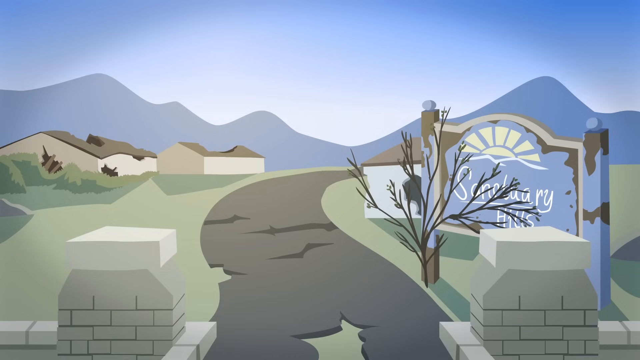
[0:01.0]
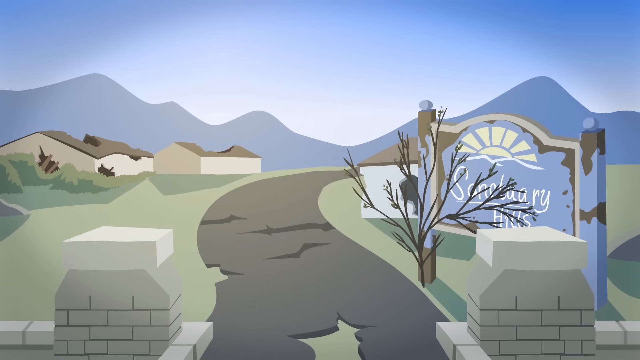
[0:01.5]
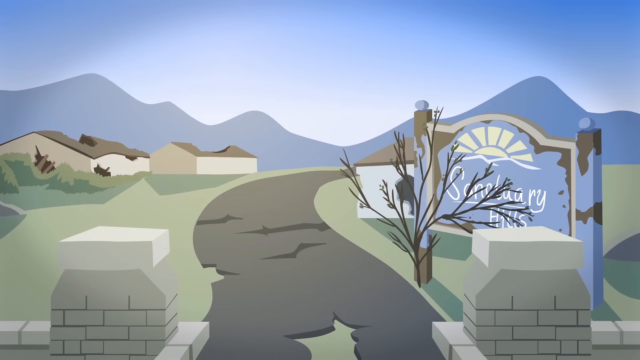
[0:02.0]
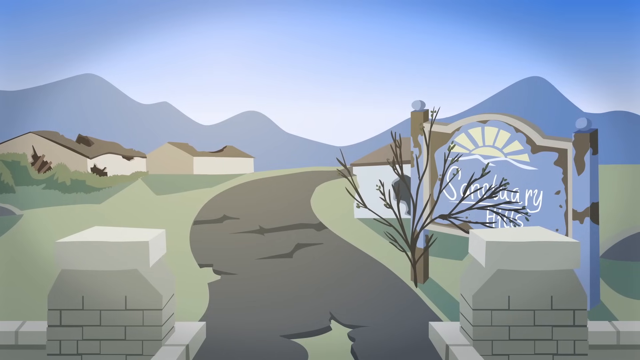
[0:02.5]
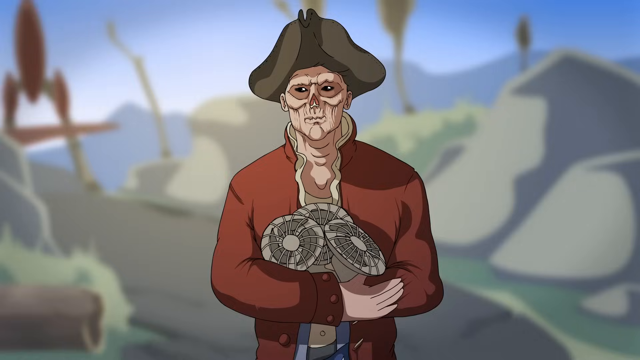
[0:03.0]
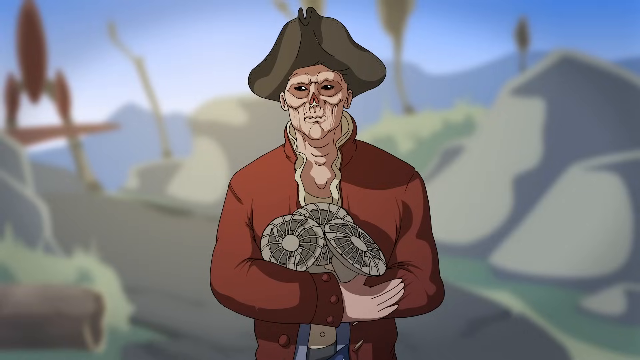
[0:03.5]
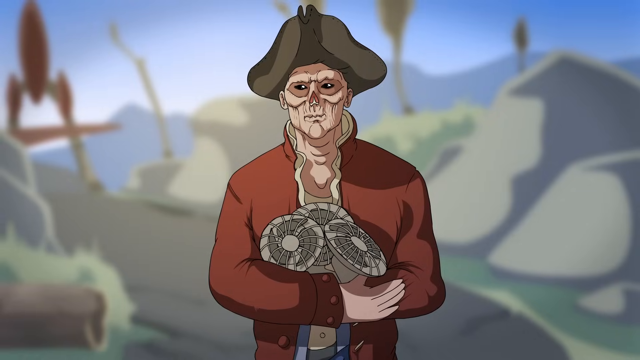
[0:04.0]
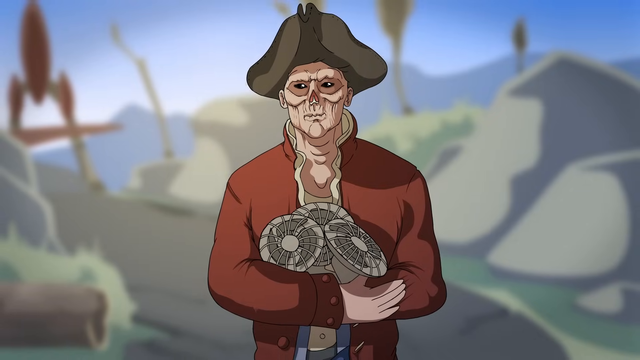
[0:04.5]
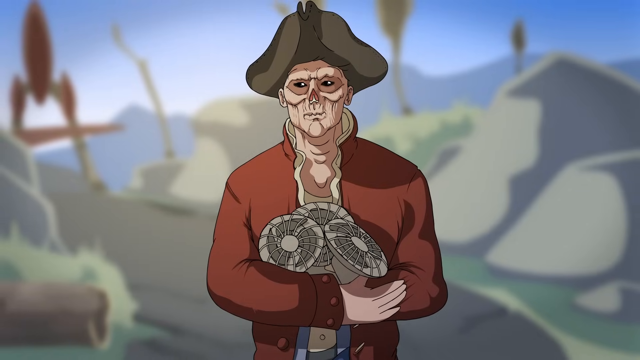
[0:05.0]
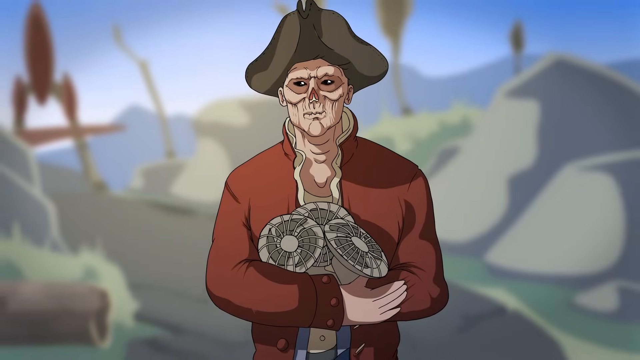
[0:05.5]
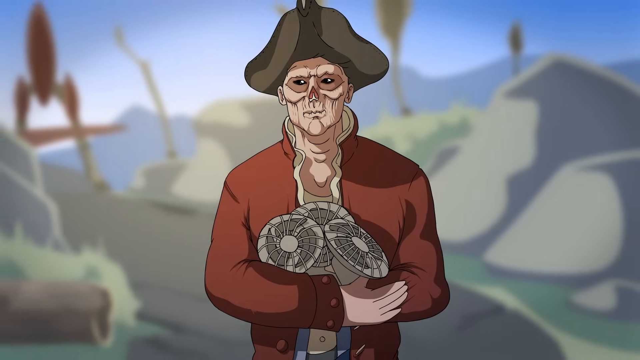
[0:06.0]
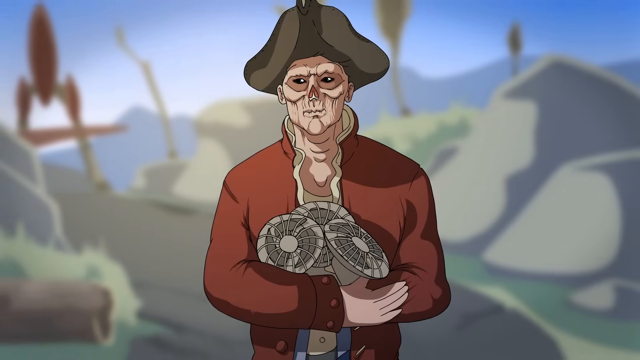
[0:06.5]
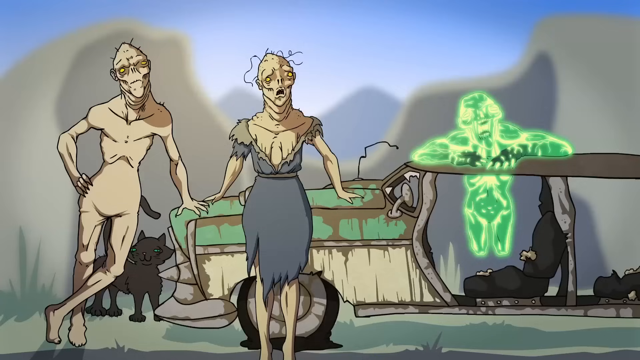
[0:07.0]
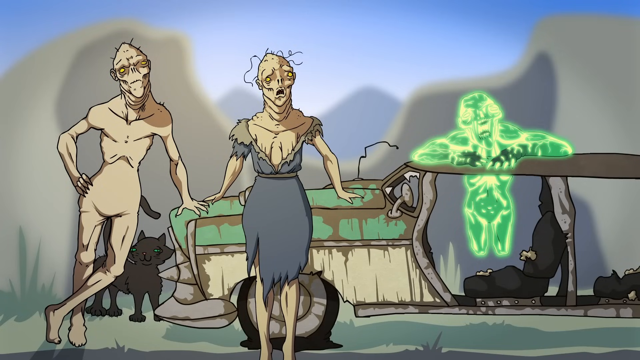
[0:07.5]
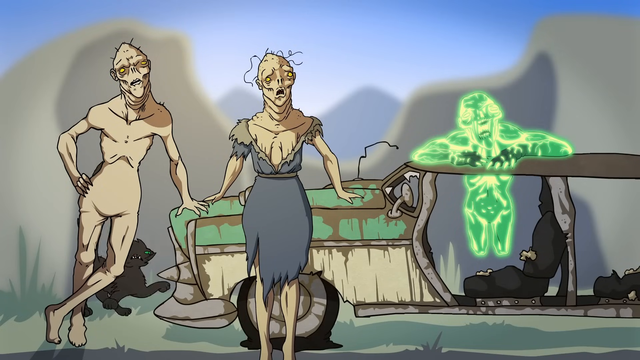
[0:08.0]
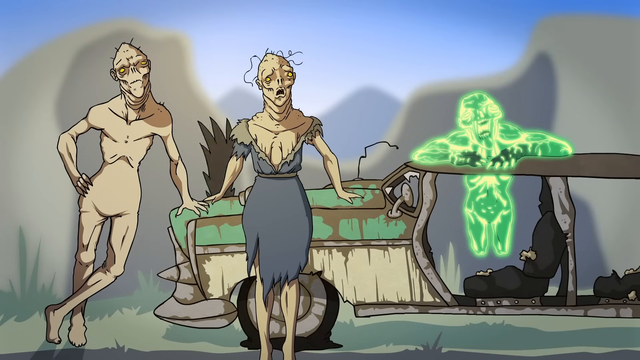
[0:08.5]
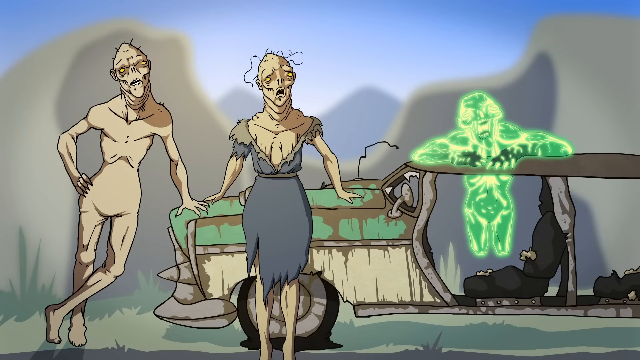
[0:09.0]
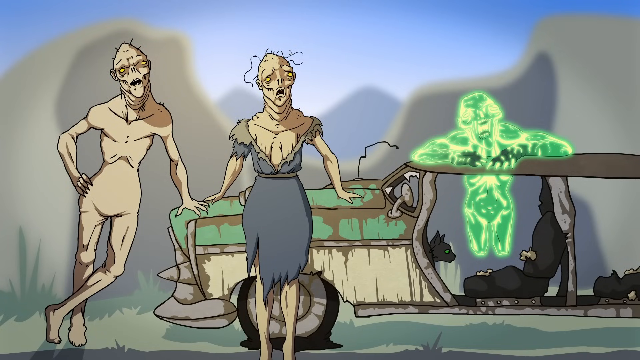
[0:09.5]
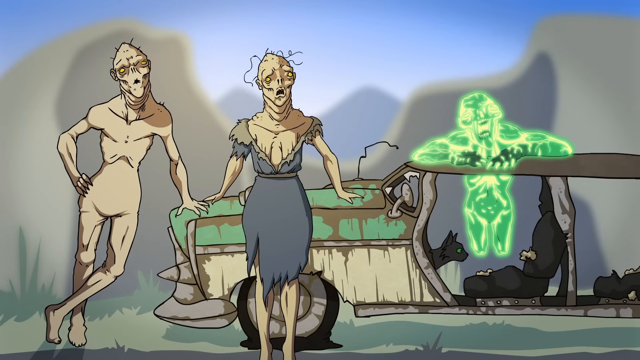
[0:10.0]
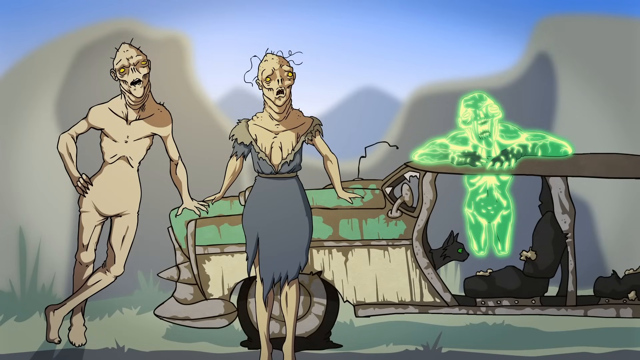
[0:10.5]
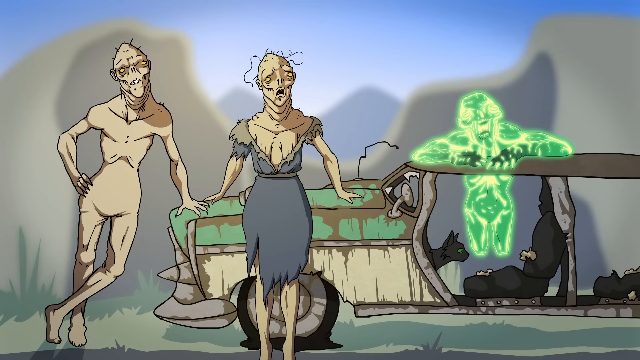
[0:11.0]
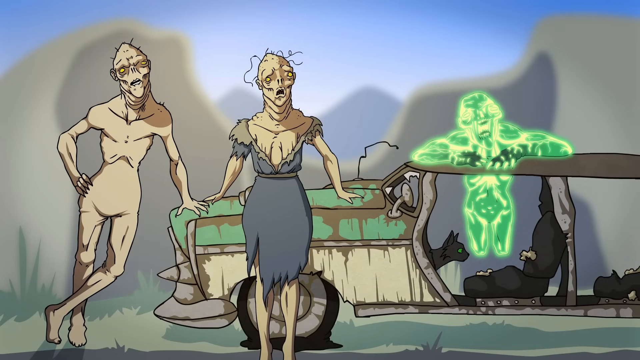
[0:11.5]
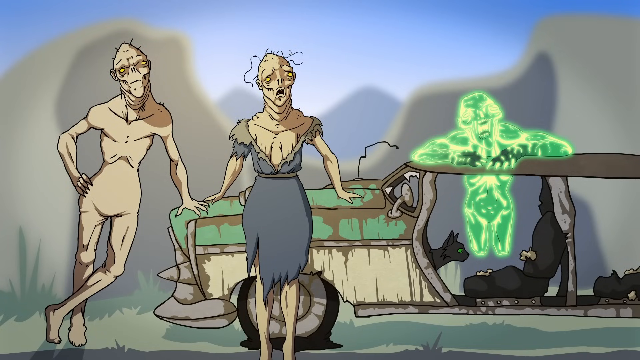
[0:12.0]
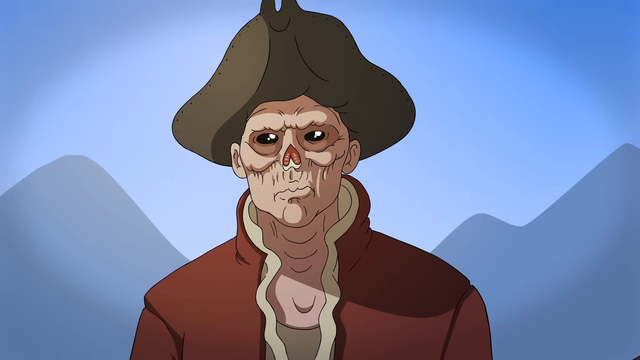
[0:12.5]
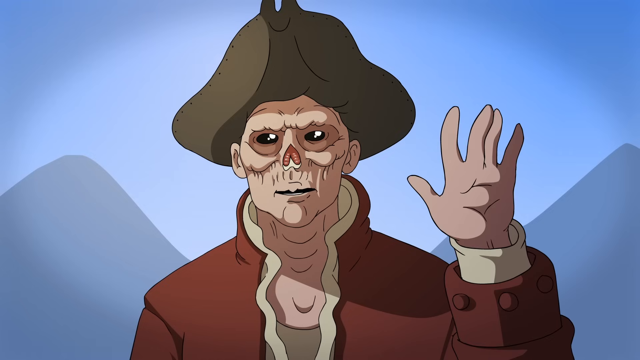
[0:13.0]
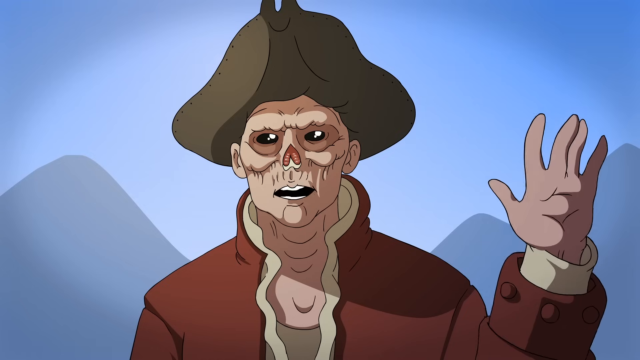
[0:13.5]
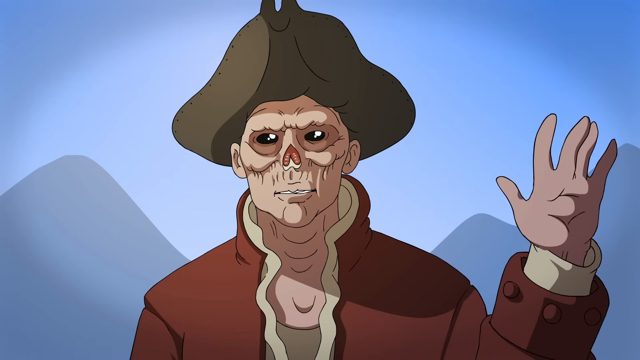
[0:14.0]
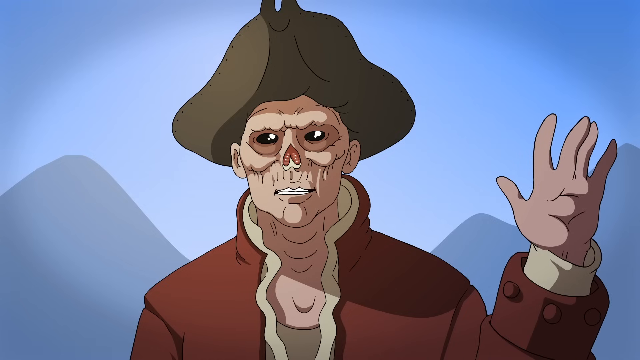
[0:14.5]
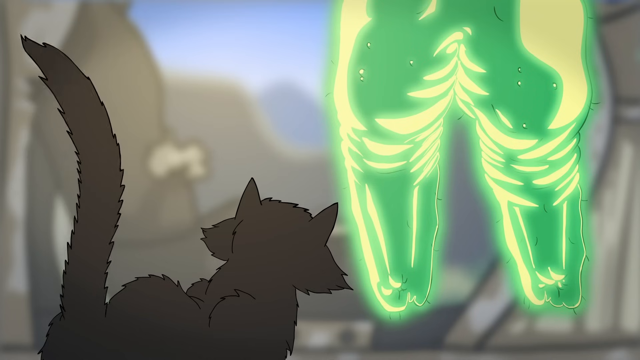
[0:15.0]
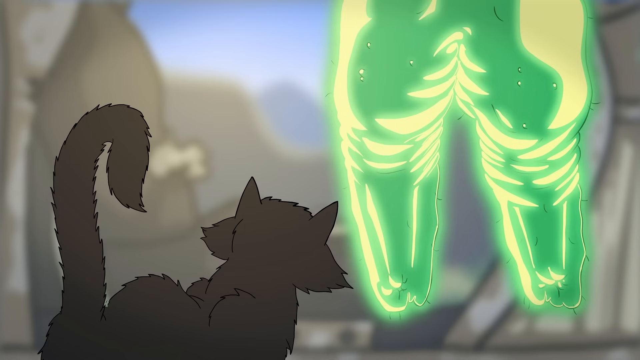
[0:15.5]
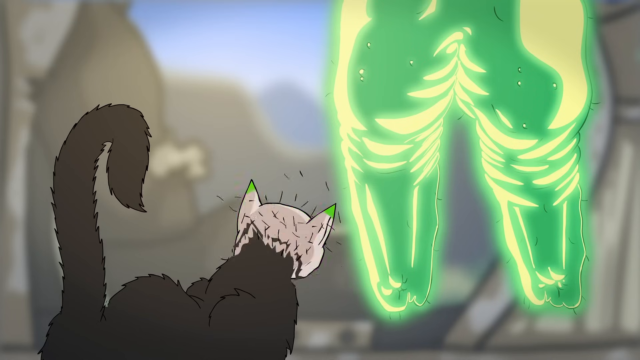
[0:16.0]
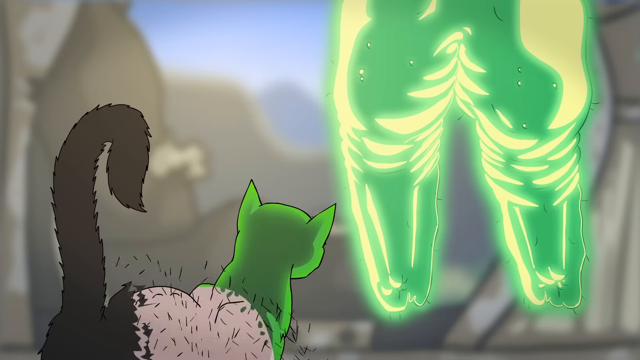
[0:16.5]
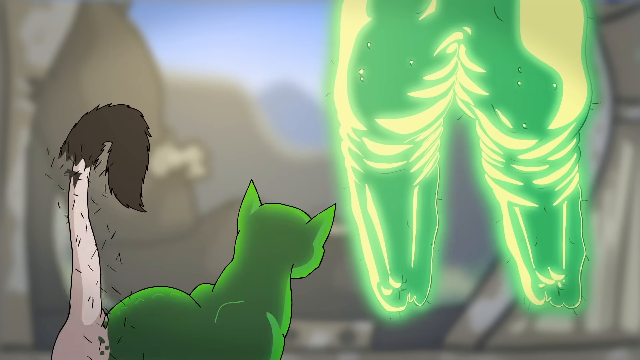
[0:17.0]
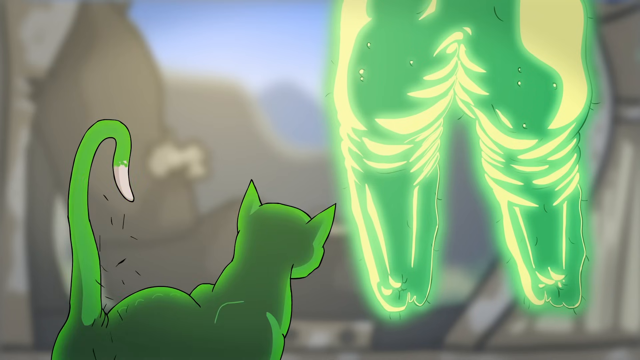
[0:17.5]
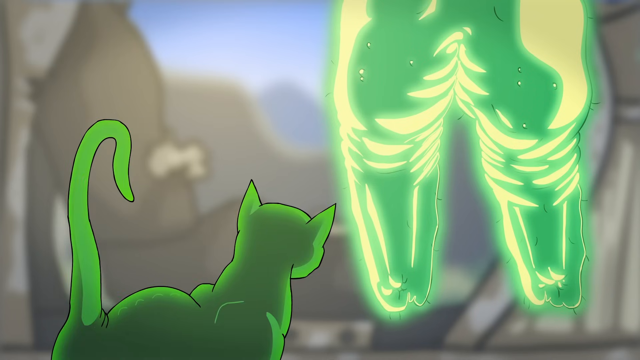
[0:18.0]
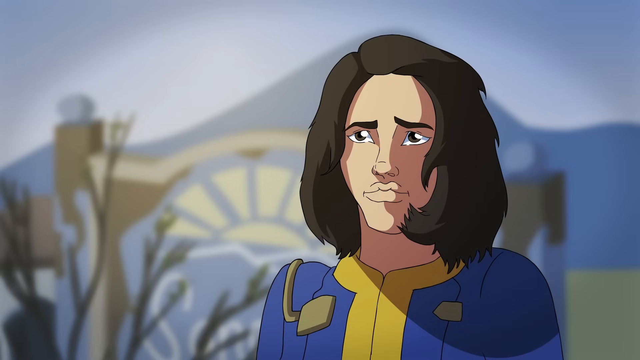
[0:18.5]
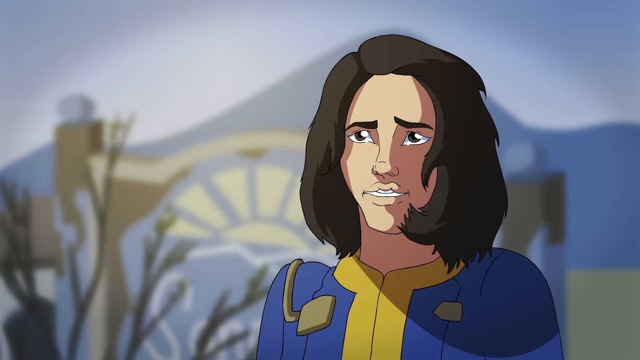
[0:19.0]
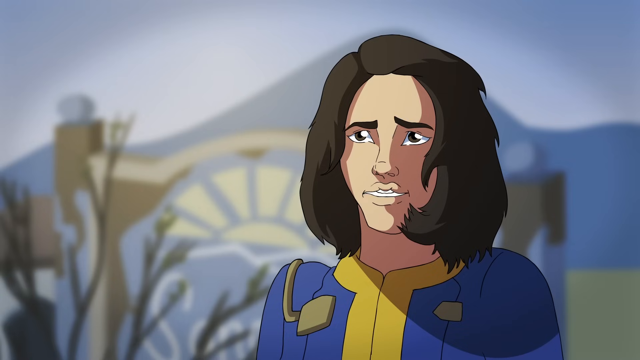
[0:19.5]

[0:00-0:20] The video opens on an outdoor scene with an old, dilapidated sign that says "Sanctuary Hills." A man in a red coat walks along. His nose appears to be missing, his skin is tightly drawn, and he carries three of what look like electric fans in his arms. Two figures stand to the left of the carcass of a car: one is naked and the other wears a tattered dress. They look like zombies, and they too are missing their noses. To the right, a figure on the car glows a greenish color. The man in the red coat with the missing nose is also wearing a pirate's hat; he holds up his left hand and waves at them. A cat walks over to the glowing green zombie-looking creature, which is missing its legs below the knees. The cat turns green, its hair falls out, and it becomes the same glowing green color.